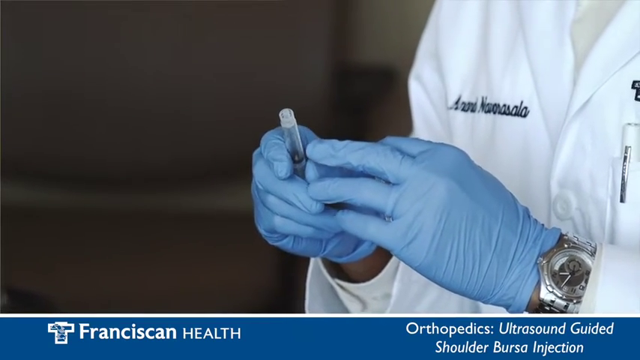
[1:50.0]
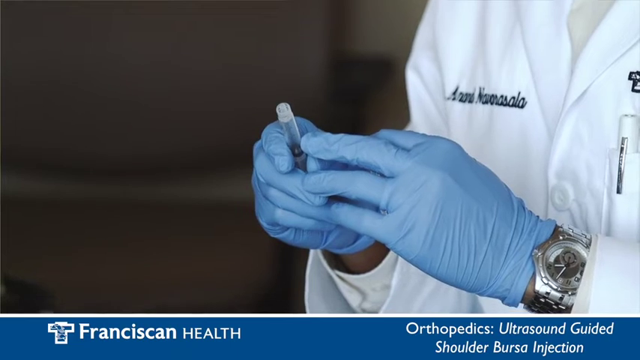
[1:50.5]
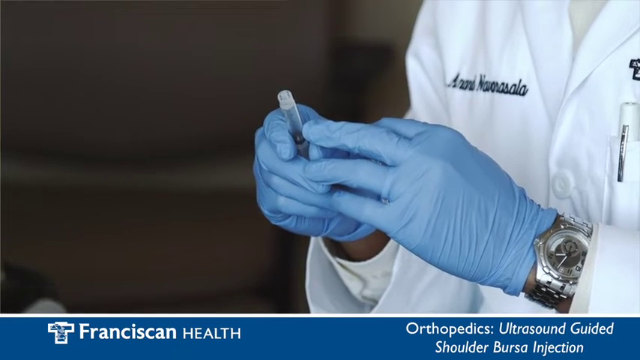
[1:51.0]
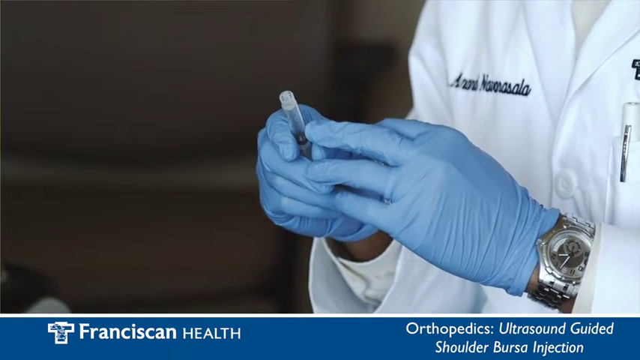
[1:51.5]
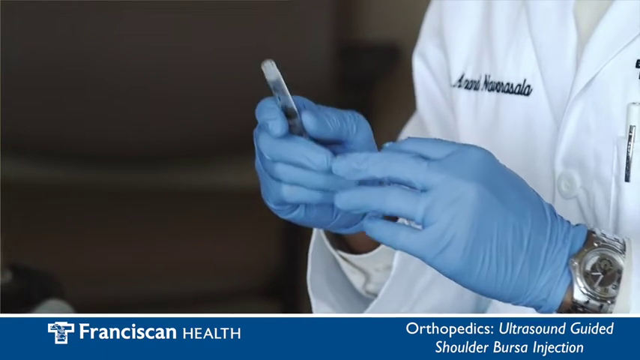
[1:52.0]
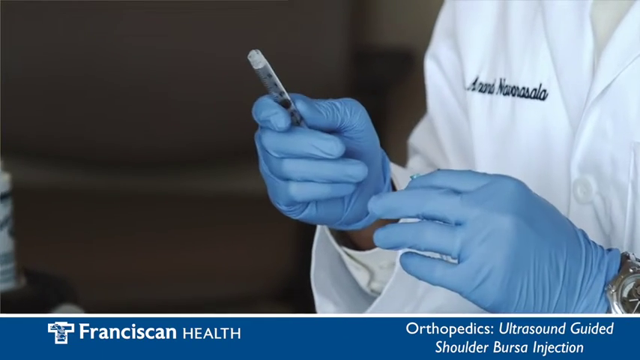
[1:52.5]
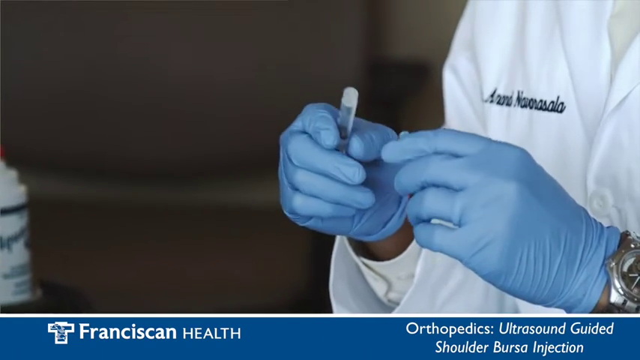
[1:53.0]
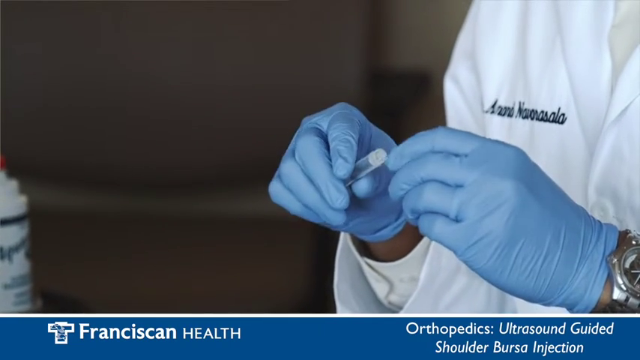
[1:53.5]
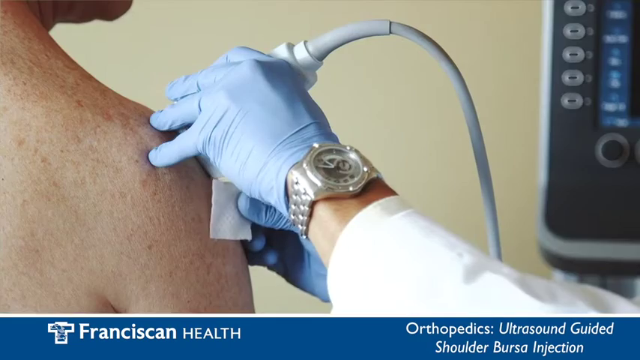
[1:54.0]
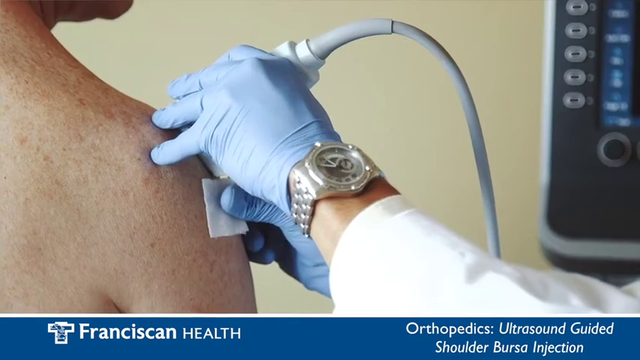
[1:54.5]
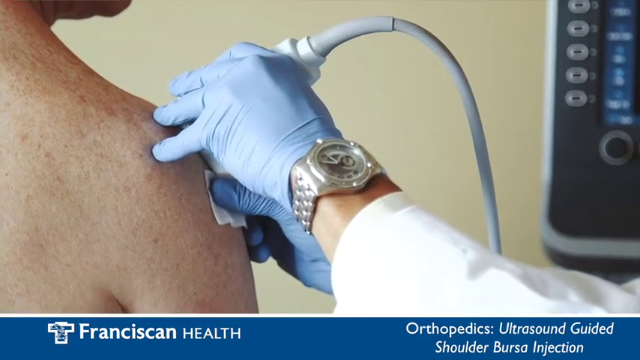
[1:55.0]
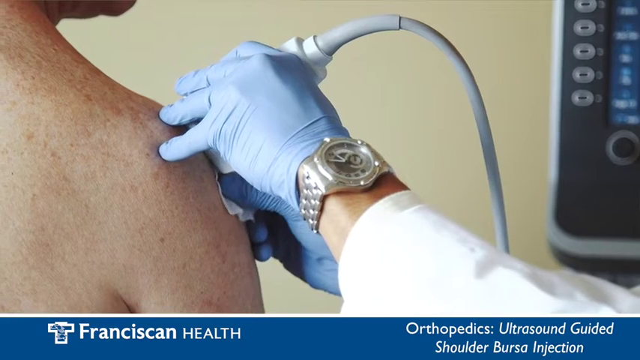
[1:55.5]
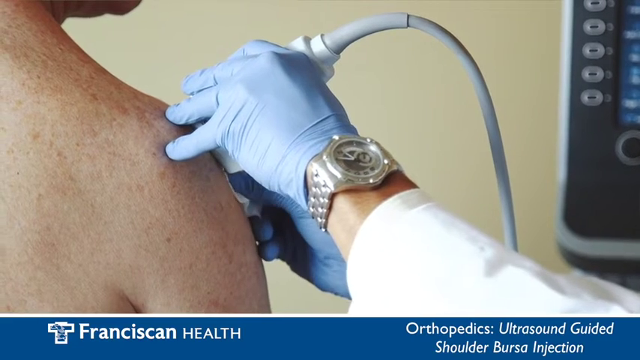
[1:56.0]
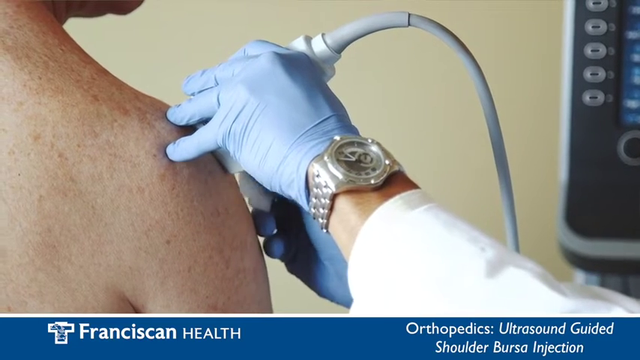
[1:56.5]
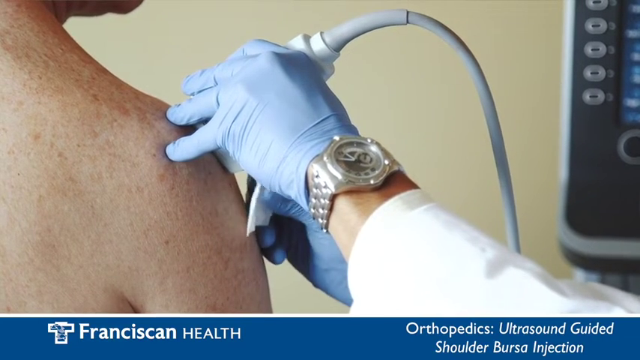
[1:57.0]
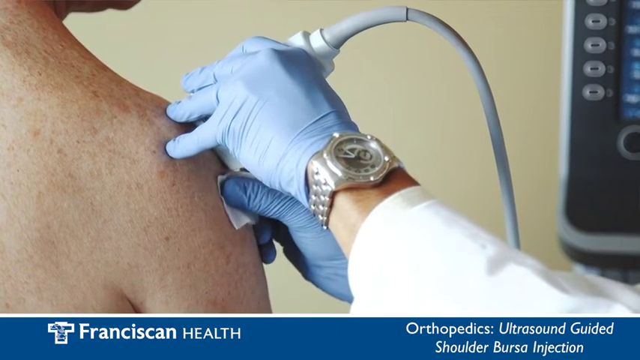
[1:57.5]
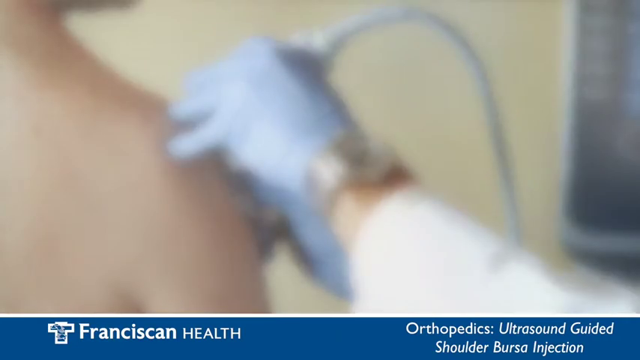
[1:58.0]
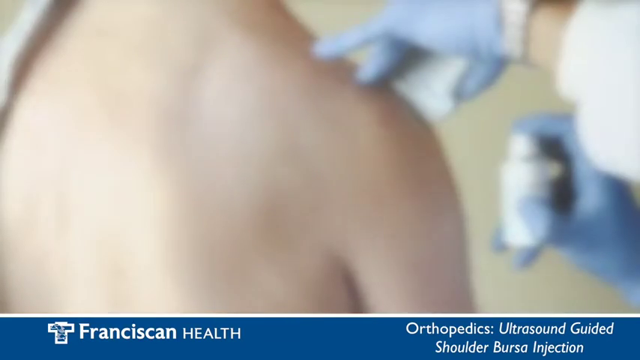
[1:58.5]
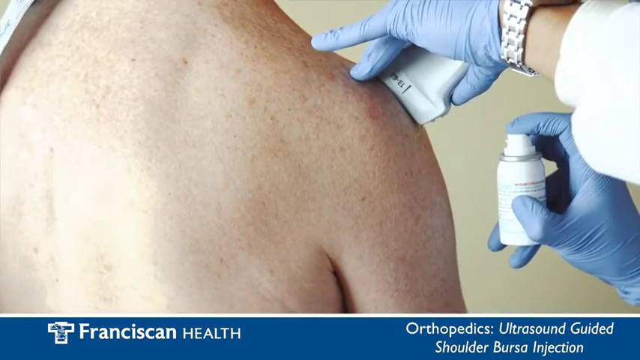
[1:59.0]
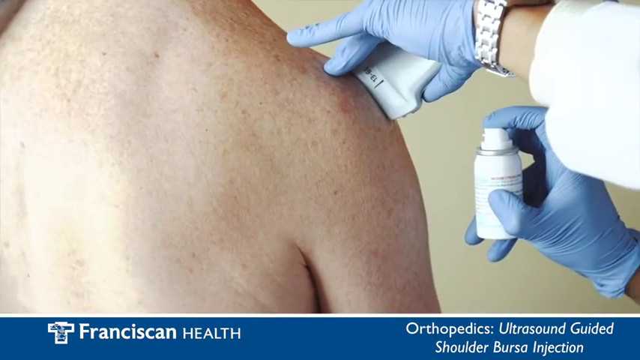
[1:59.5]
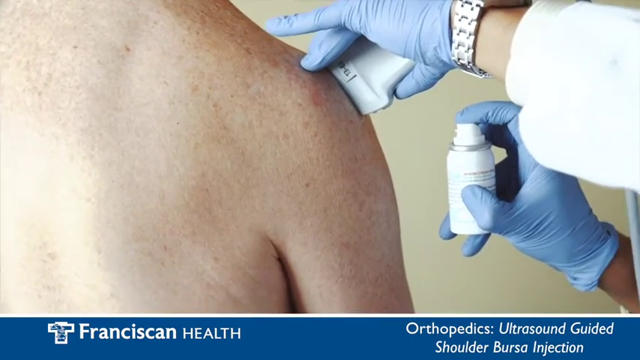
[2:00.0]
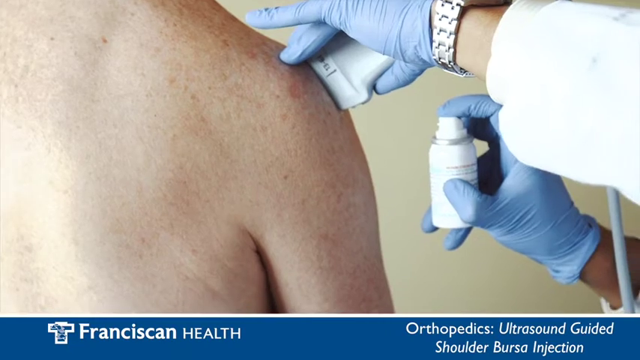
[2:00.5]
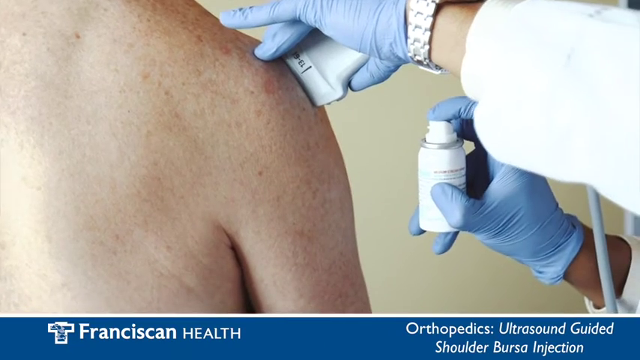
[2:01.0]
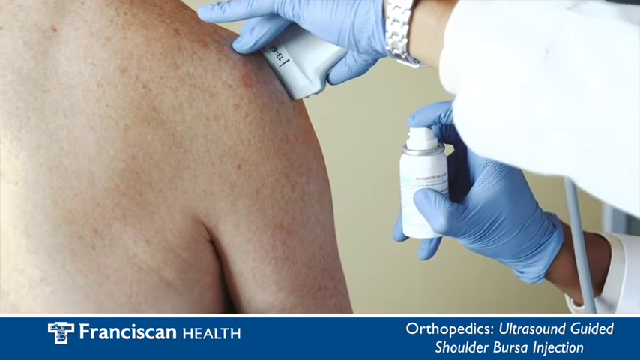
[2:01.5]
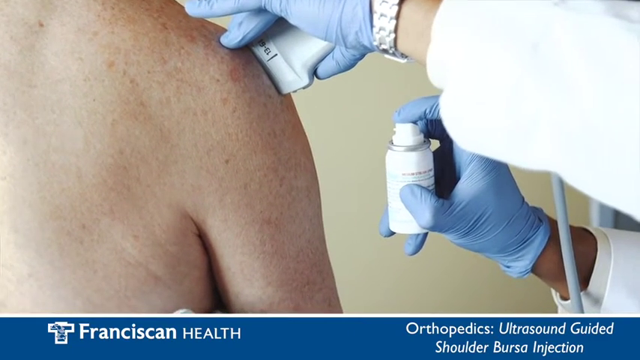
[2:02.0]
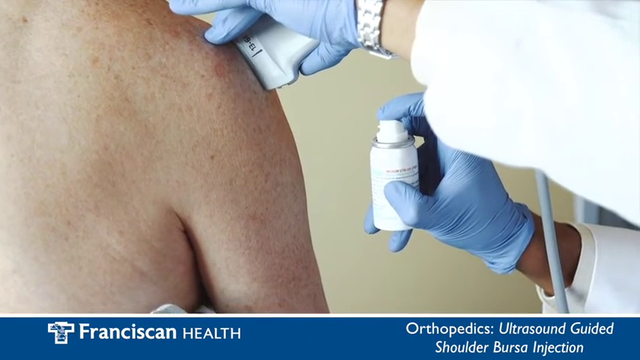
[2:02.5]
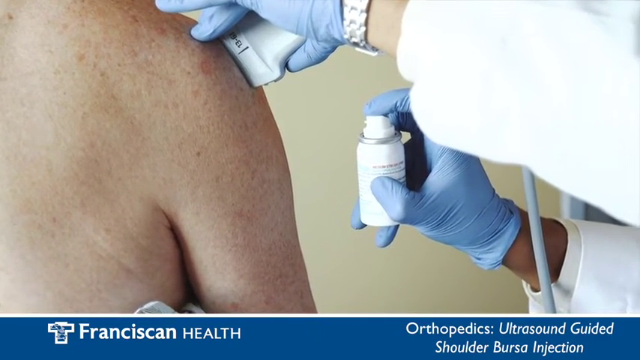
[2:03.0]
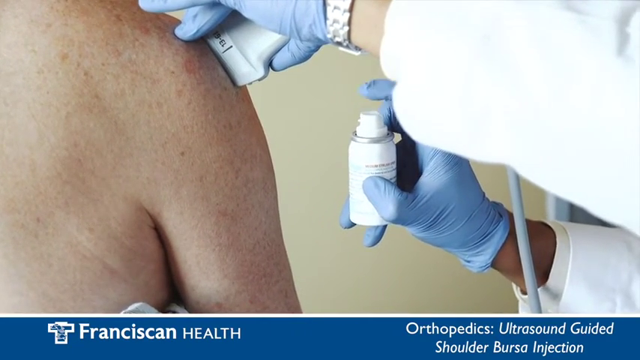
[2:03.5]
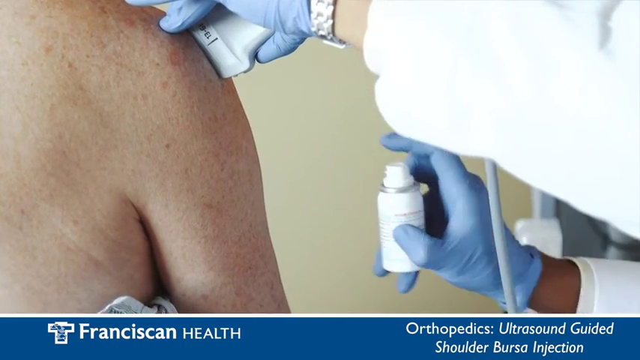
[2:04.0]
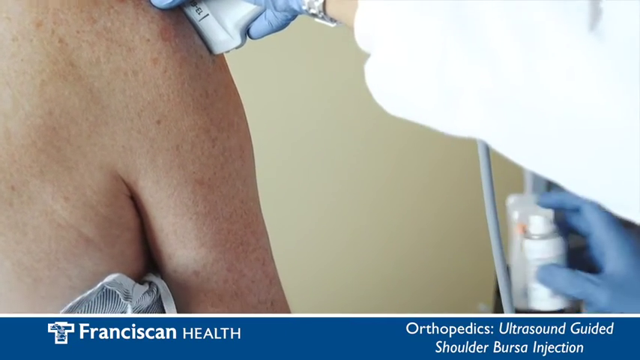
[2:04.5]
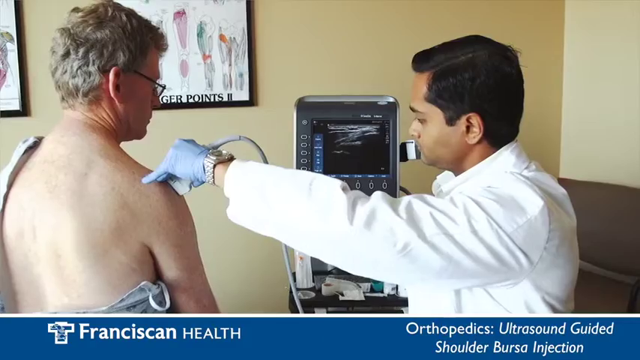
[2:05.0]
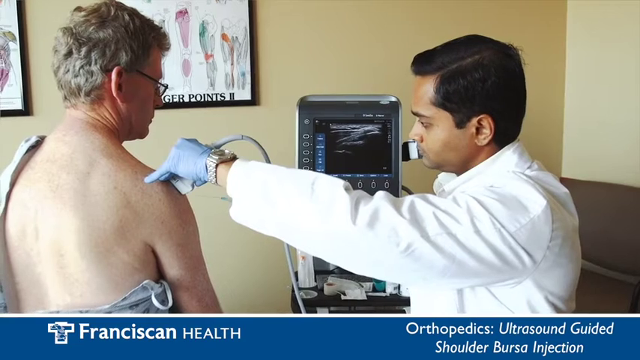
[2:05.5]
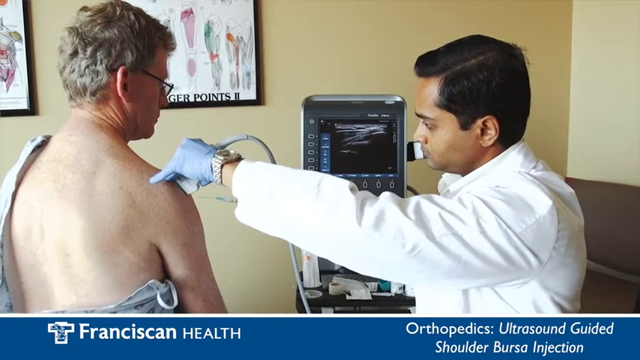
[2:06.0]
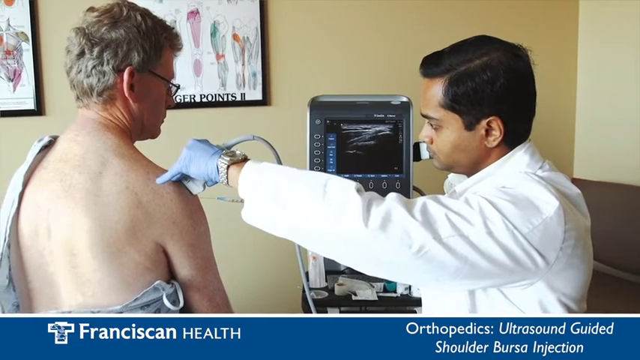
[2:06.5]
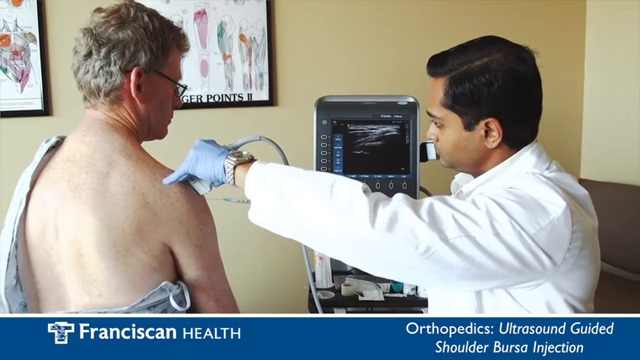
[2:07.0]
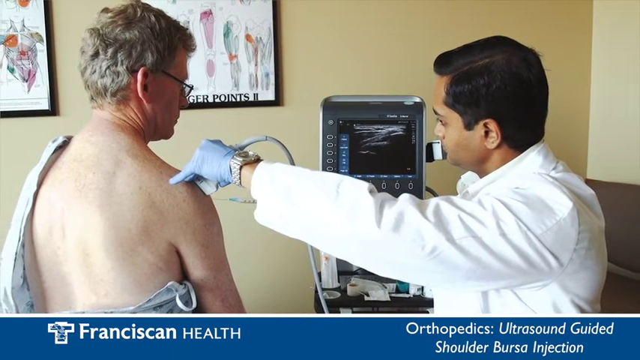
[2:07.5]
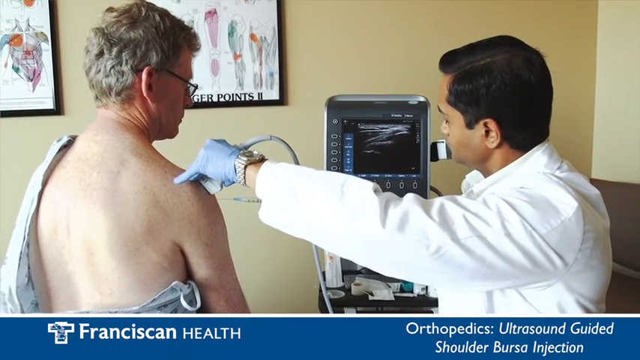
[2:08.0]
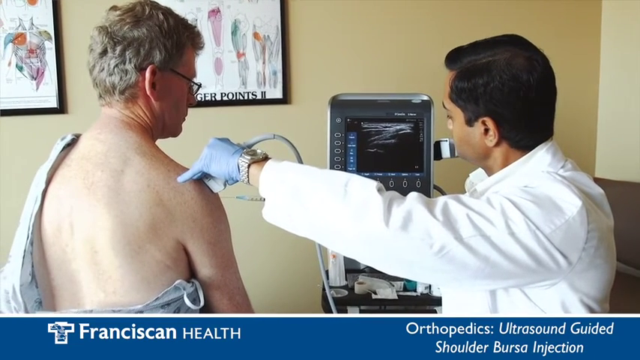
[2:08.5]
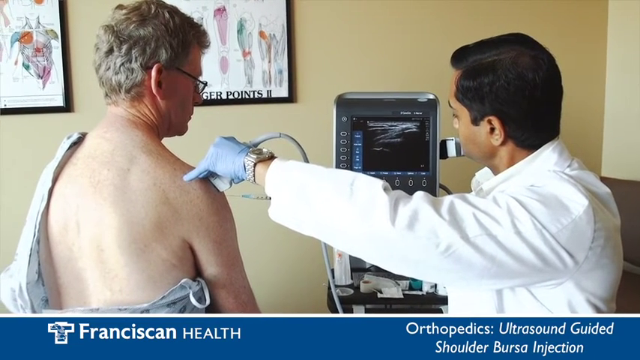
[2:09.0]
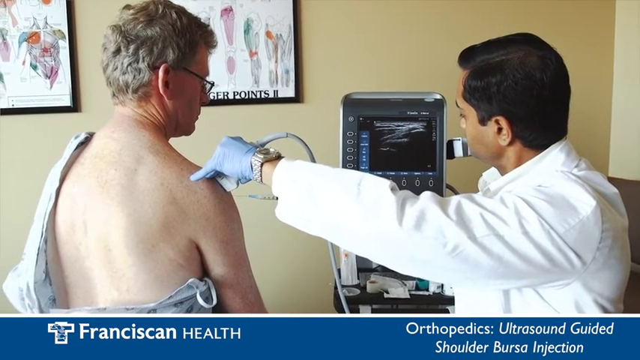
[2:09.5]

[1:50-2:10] The doctor's name is embroidered in blue cursive on his white doctor's coat, and his silver watch has a crescent dark gray shape in the middle. A pen is in the breast pocket on his left, with a medical symbol above the pocket. He holds a syringe in his right hand with no needle in it yet; it has a black plunger and a white or translucent tip. The doctor wipes the area with a little white square just below where he holds the ultrasound scanner, then appears to spray something from a small white canister onto the patient's shoulder. He then looks intently at the shoulder with the needle attached to the syringe, hovering it at the injection site, while the gray-haired patient keeps watching the screen.